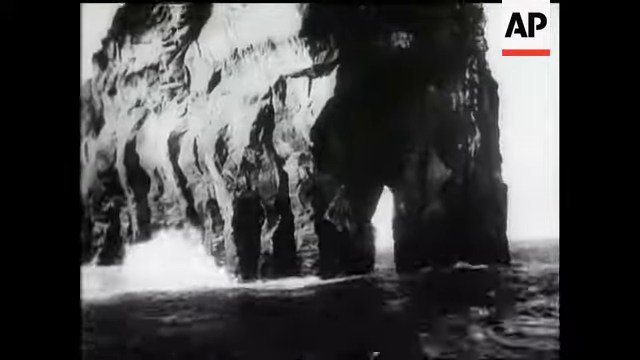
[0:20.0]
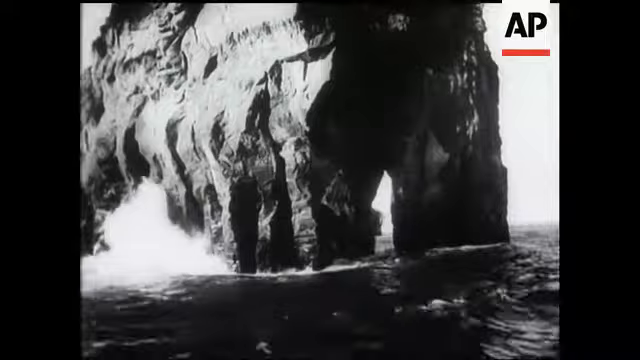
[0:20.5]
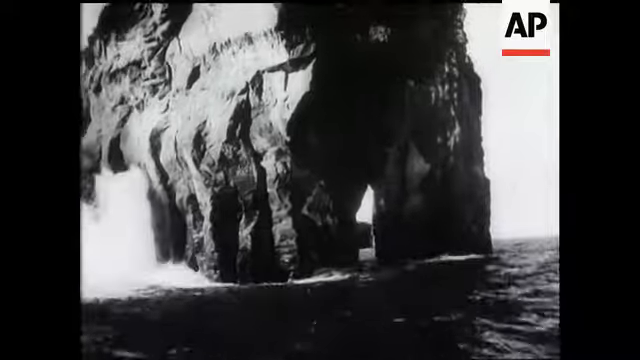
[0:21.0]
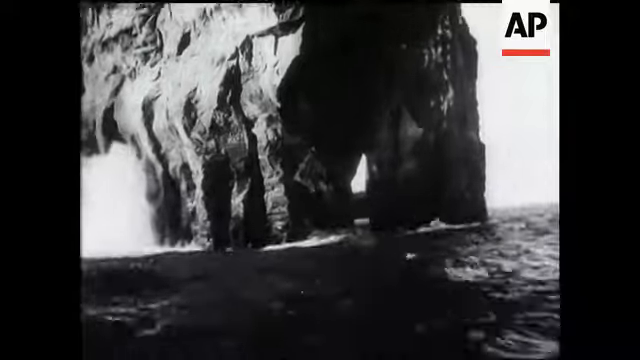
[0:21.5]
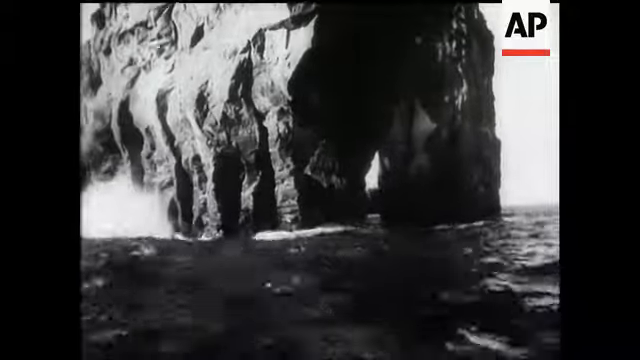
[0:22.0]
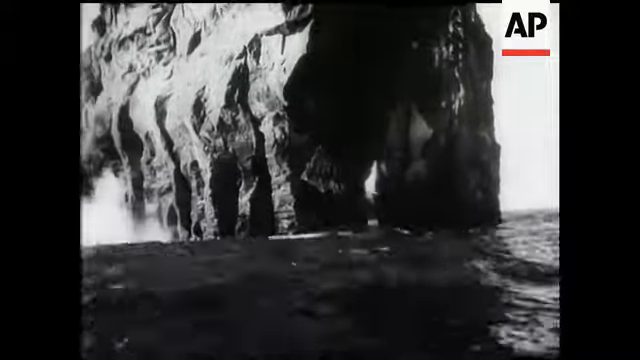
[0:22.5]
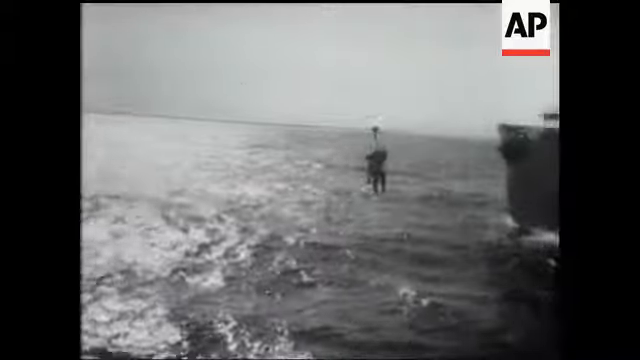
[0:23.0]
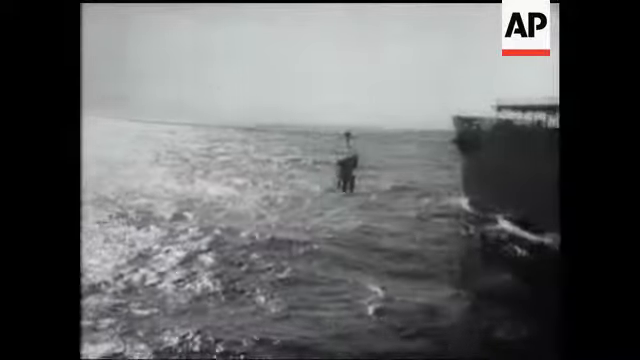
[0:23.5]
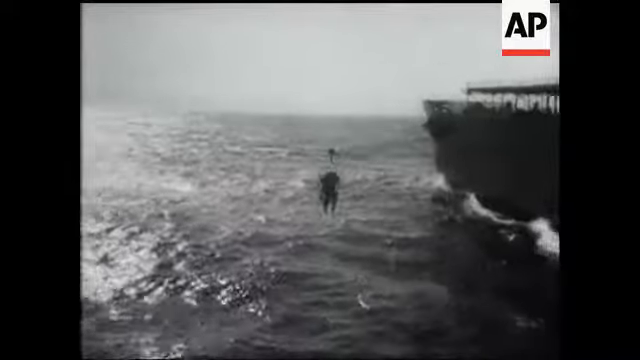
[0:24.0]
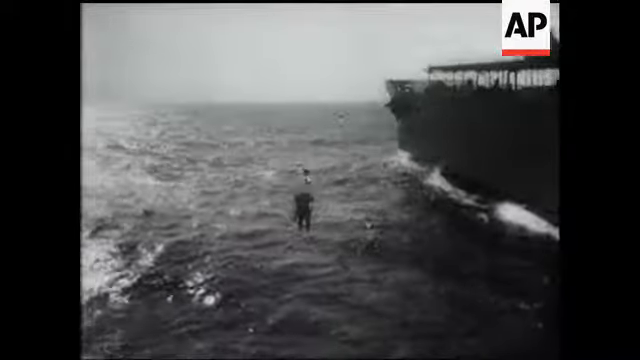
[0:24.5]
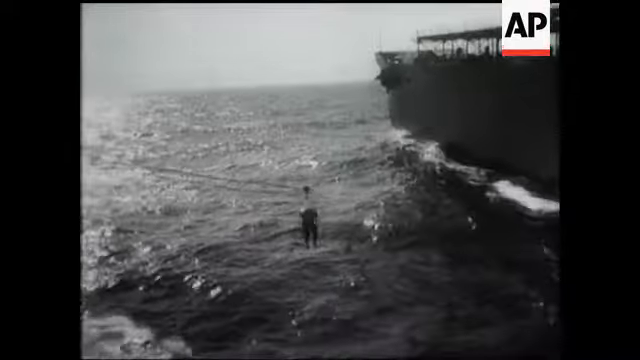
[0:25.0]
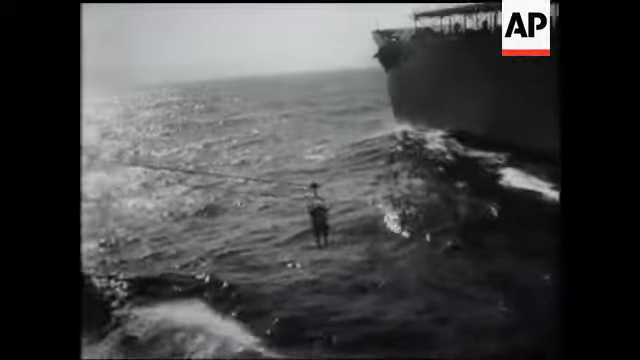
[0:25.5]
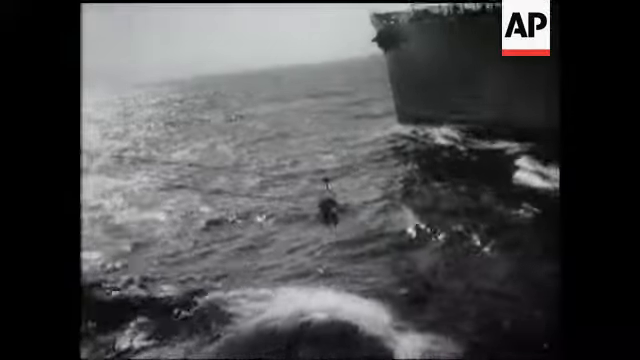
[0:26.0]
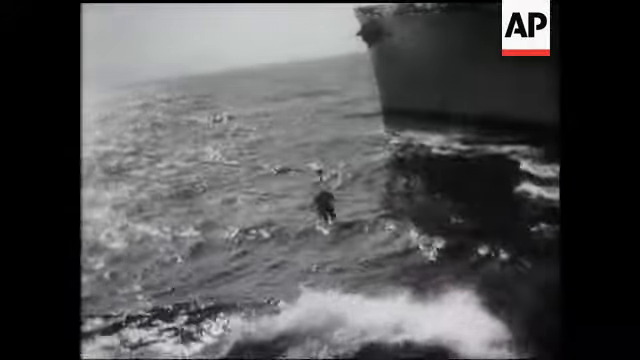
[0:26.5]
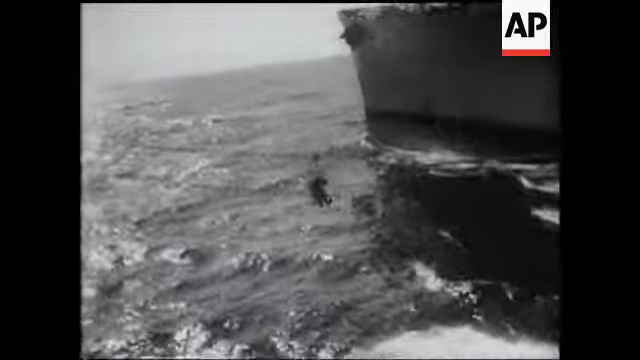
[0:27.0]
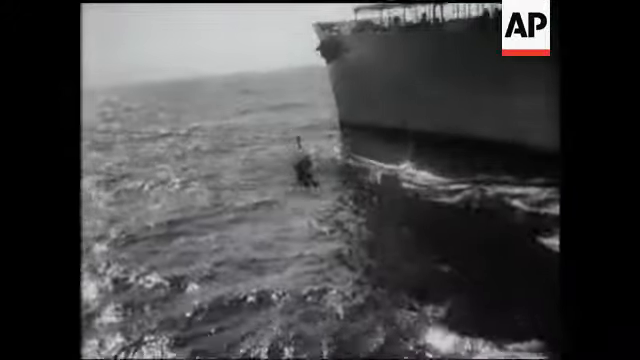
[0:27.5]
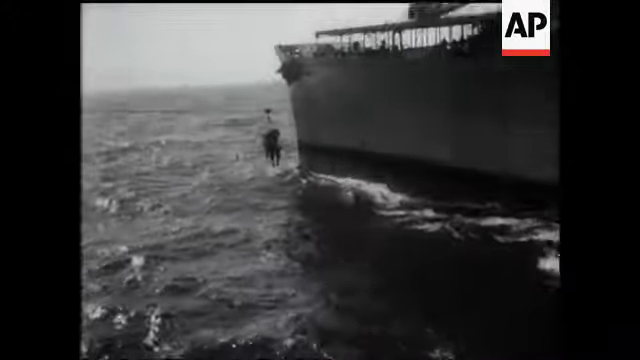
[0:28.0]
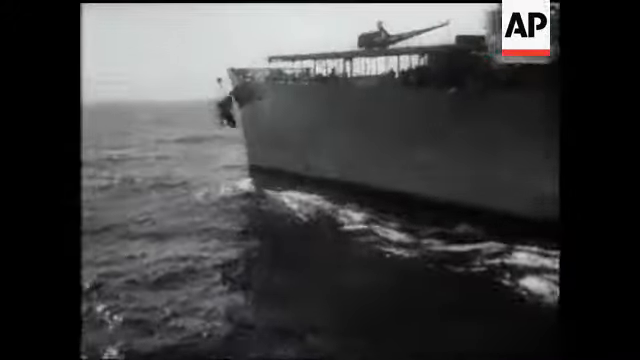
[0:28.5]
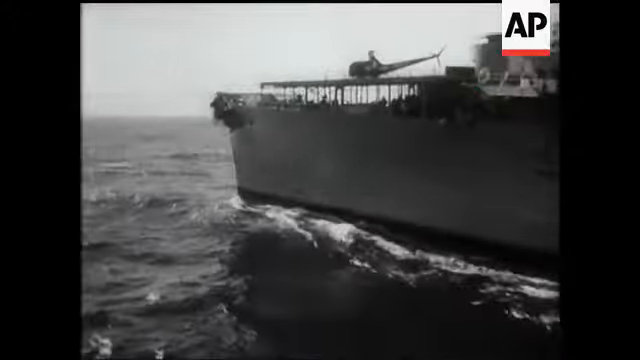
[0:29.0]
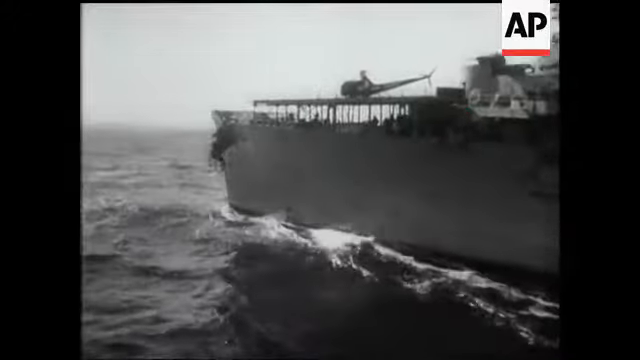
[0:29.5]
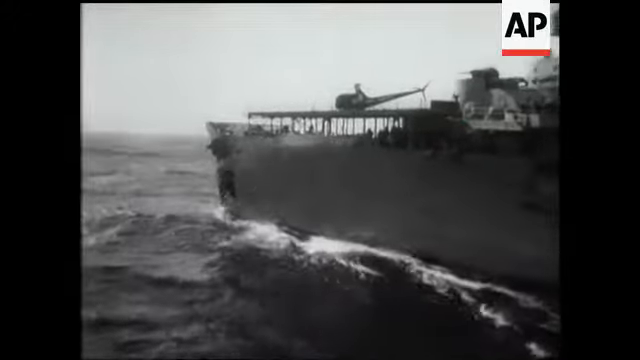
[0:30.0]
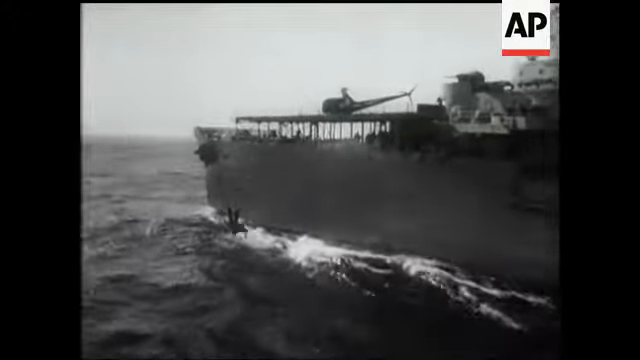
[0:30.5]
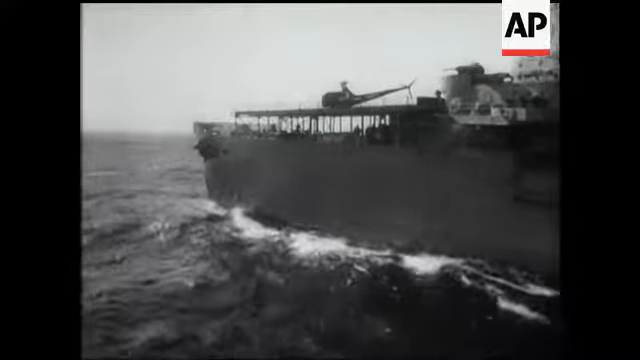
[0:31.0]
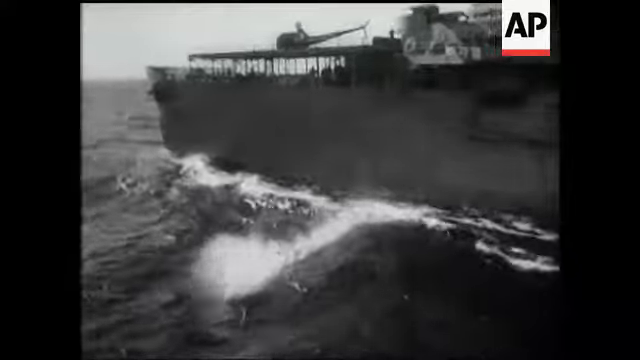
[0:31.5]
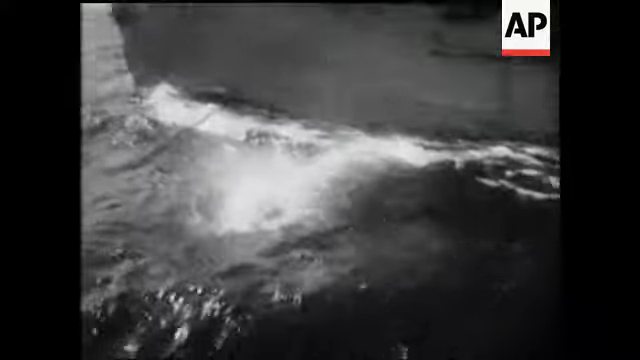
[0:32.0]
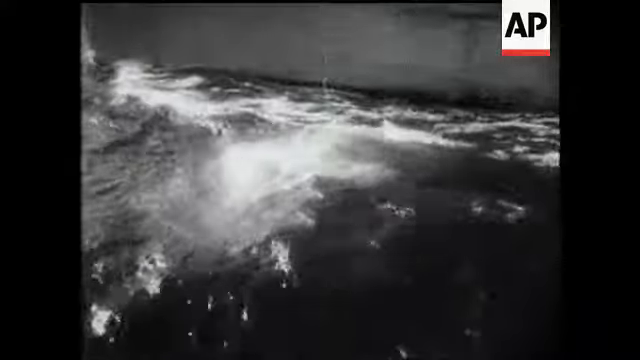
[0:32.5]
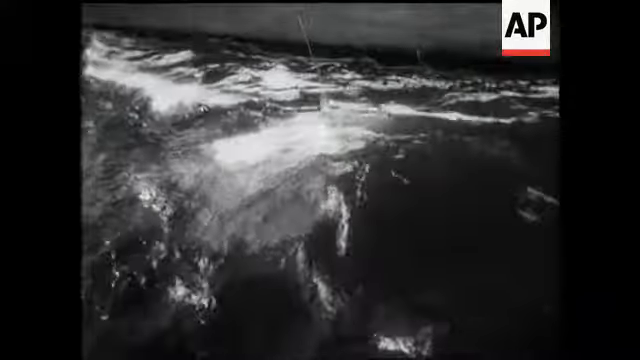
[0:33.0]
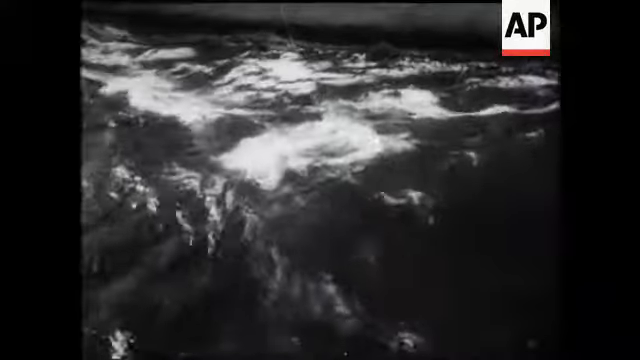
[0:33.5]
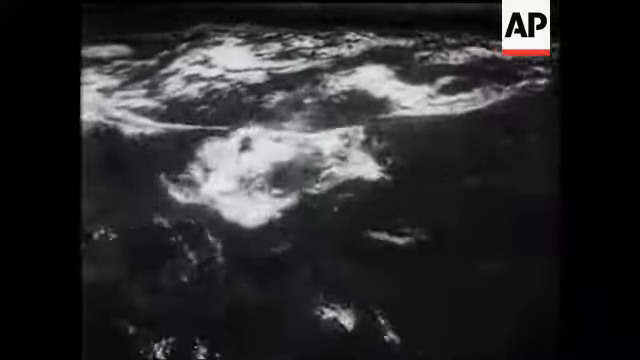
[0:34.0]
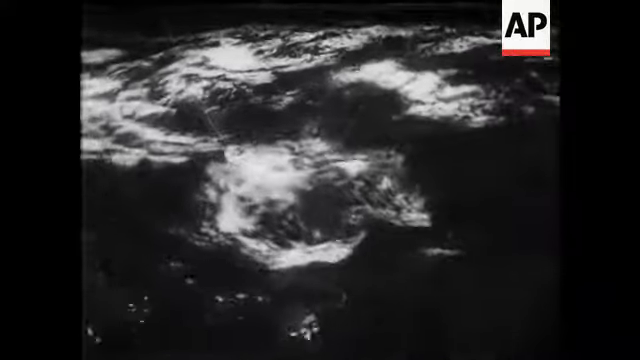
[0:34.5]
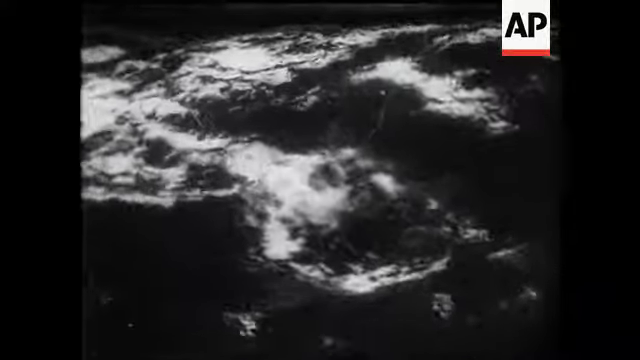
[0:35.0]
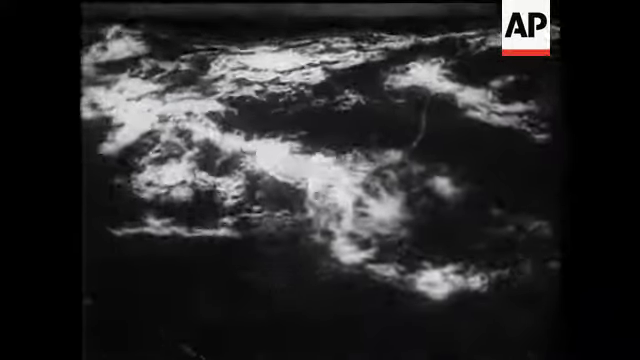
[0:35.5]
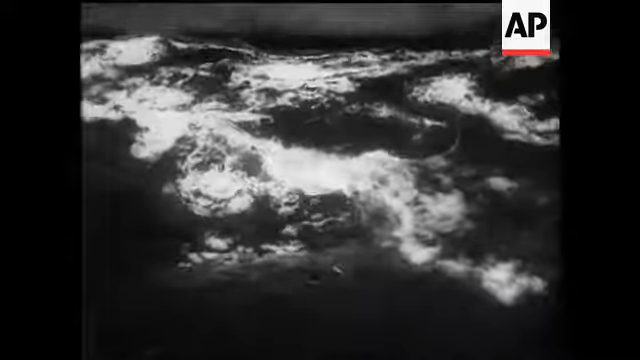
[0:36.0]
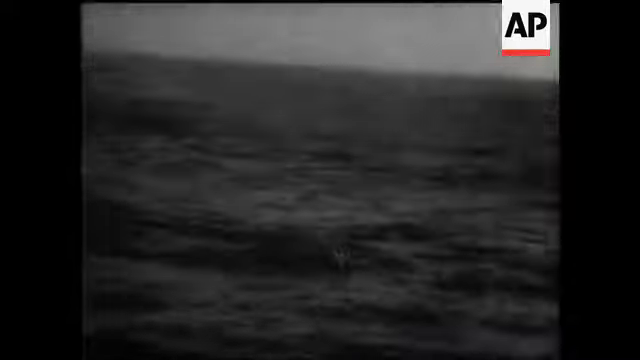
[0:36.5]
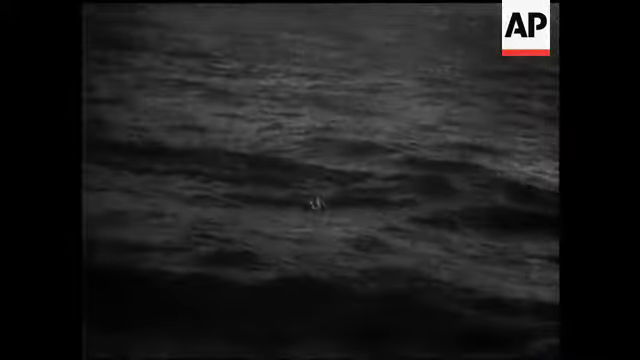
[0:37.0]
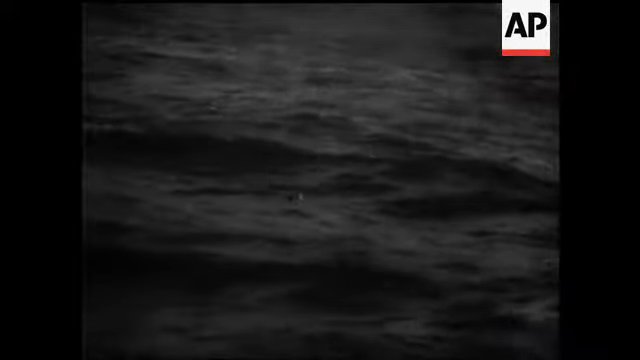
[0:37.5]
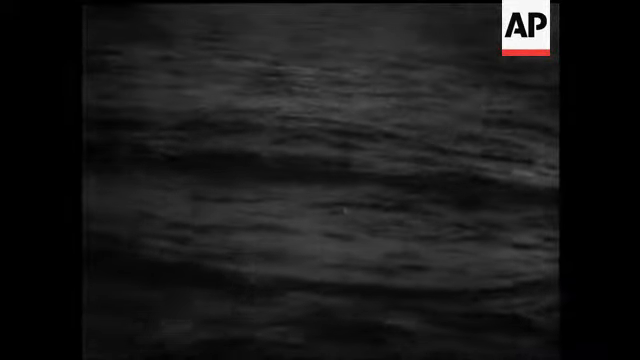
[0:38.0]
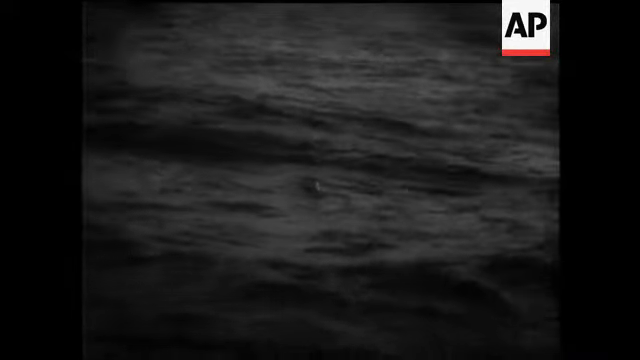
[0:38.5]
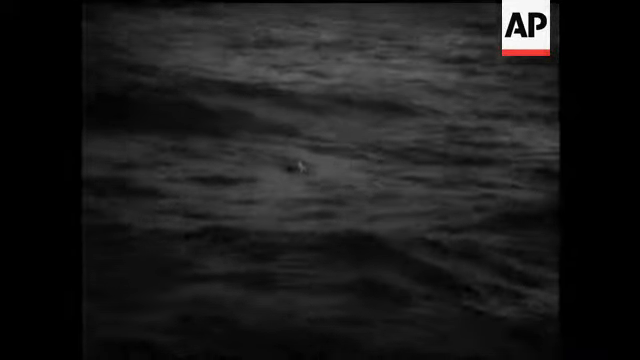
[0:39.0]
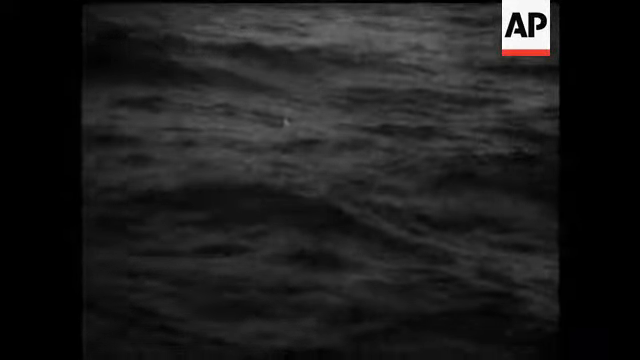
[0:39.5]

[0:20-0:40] The boat continues sailing around the sea stack. Next, a device is used to move a person between two moving ships; it is apparently something like a breecher's buoy, with ropes running from one ship to the other and a seat attached to them on which a man is pulled across. It looks very precarious, and suddenly the ropes snap and the man falls explosively into the sea. He seems to have survived, and he is seen bobbing around in the open sea.